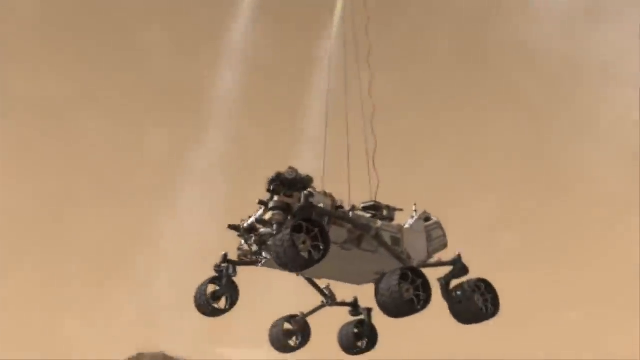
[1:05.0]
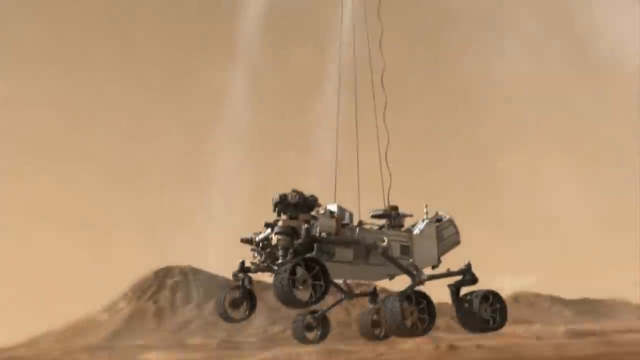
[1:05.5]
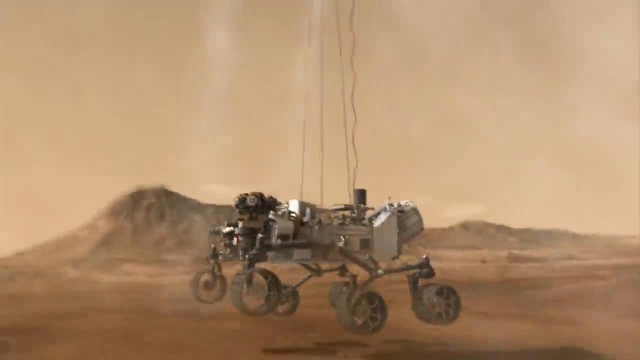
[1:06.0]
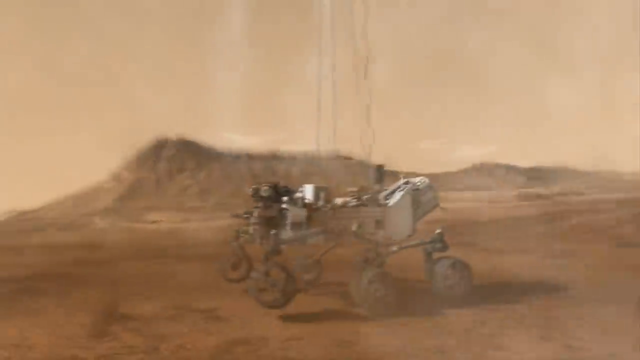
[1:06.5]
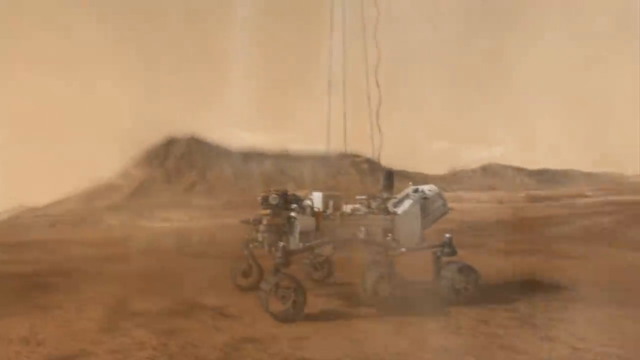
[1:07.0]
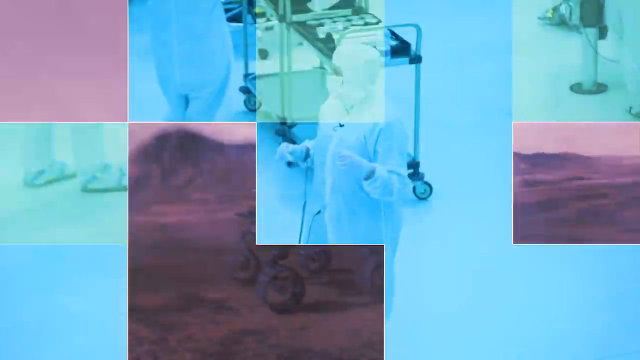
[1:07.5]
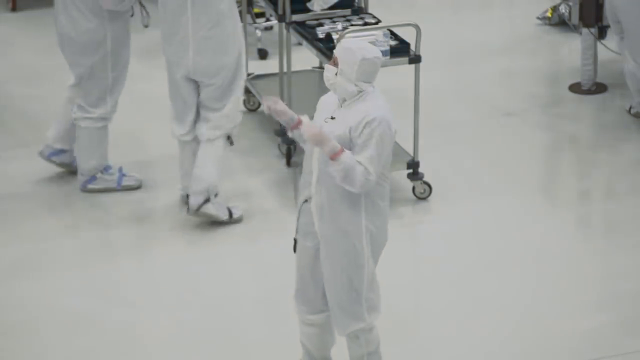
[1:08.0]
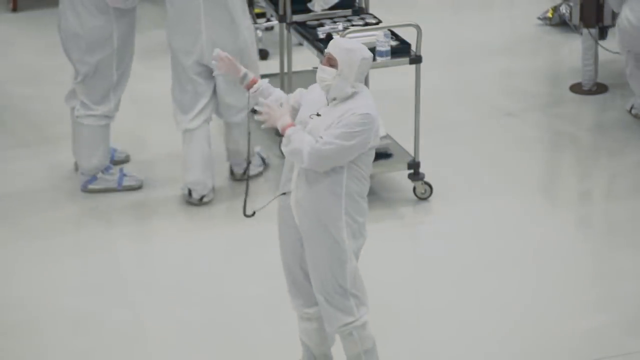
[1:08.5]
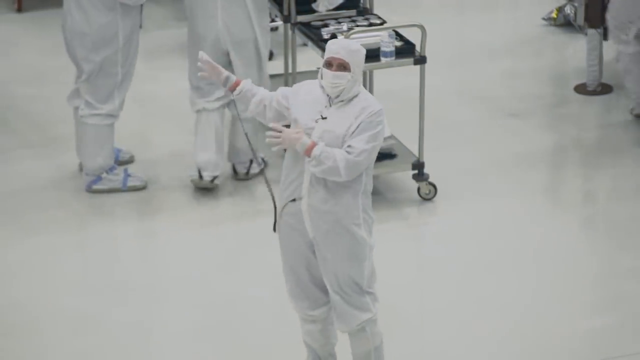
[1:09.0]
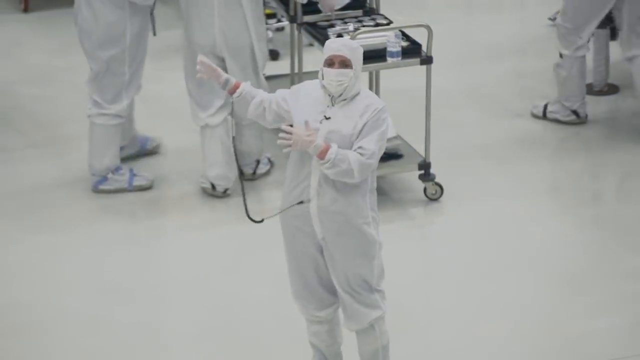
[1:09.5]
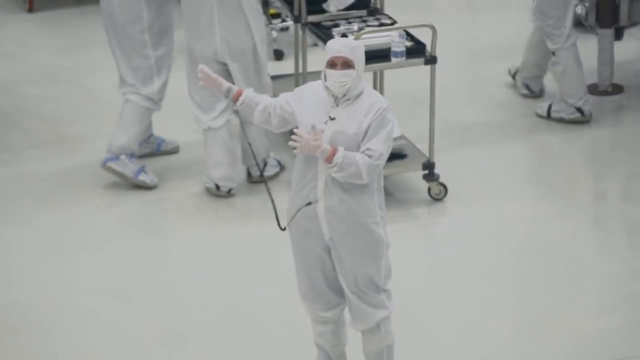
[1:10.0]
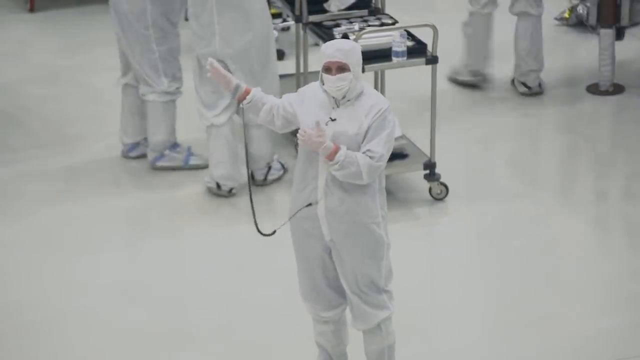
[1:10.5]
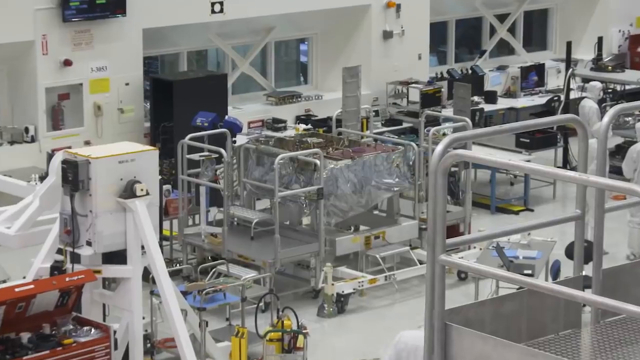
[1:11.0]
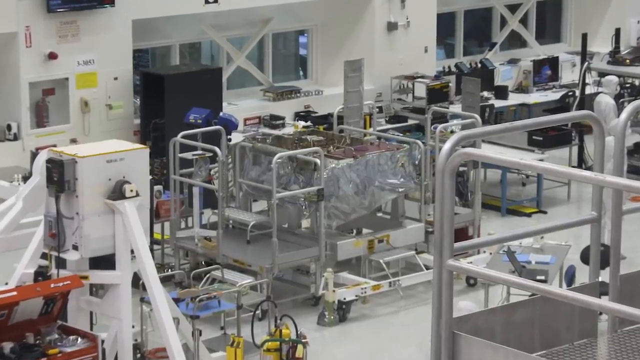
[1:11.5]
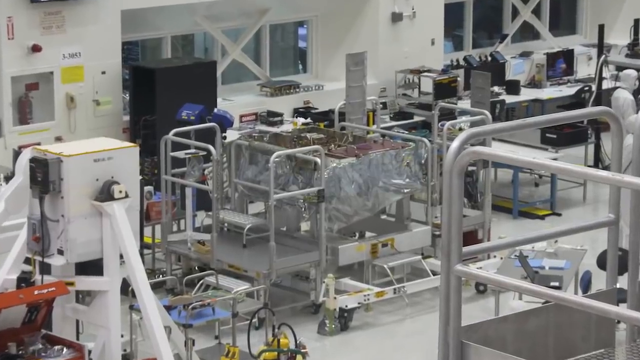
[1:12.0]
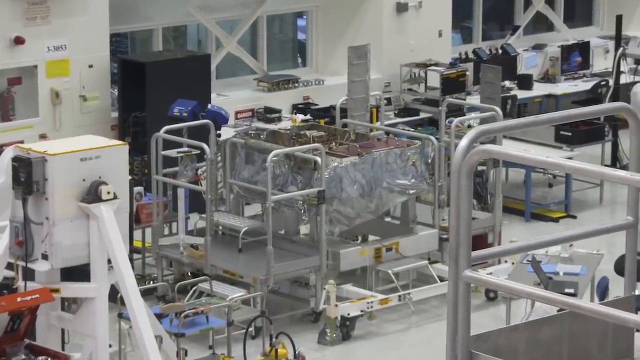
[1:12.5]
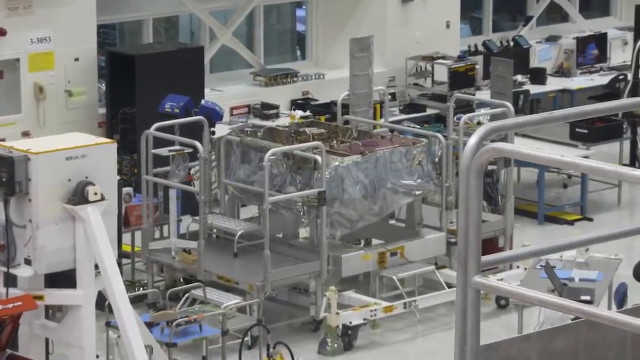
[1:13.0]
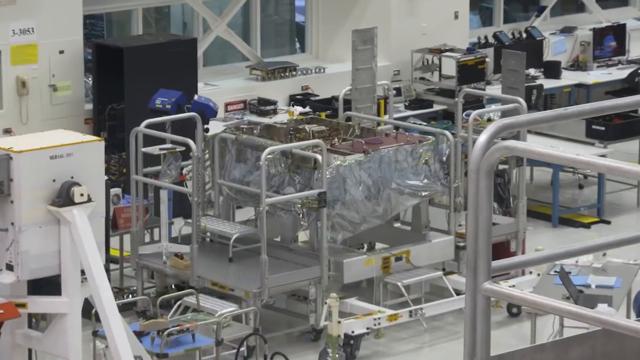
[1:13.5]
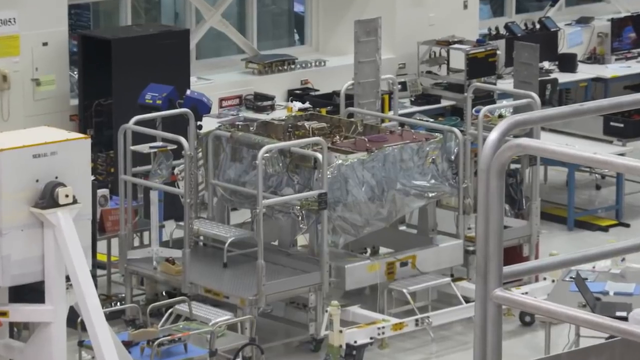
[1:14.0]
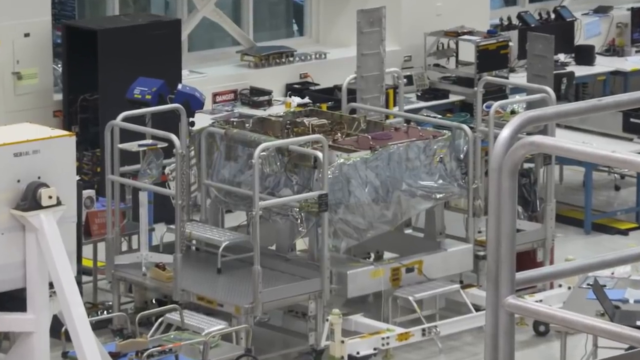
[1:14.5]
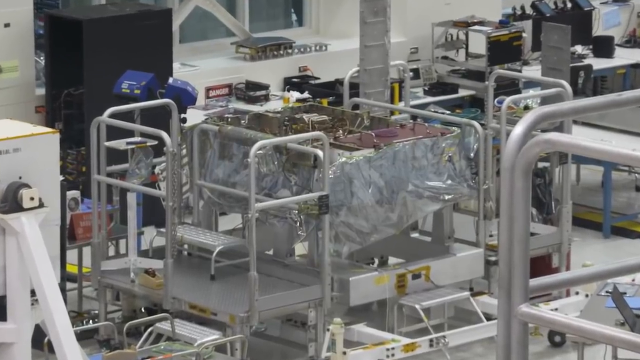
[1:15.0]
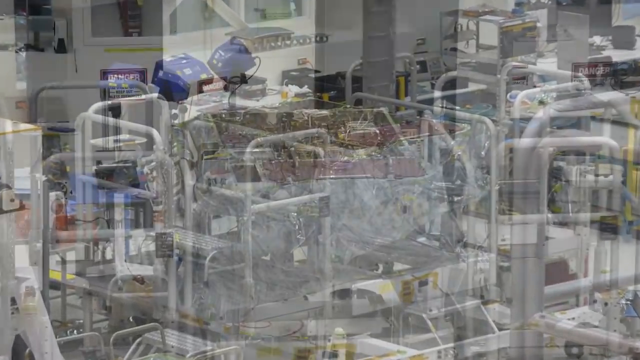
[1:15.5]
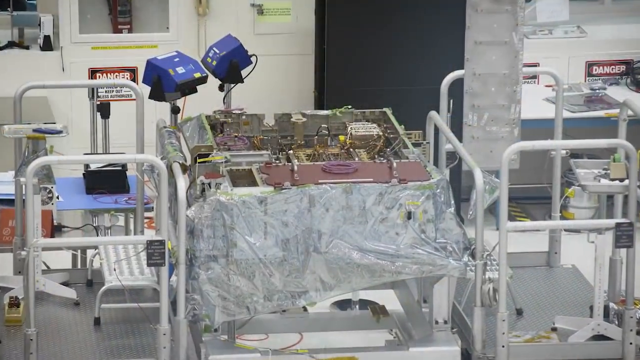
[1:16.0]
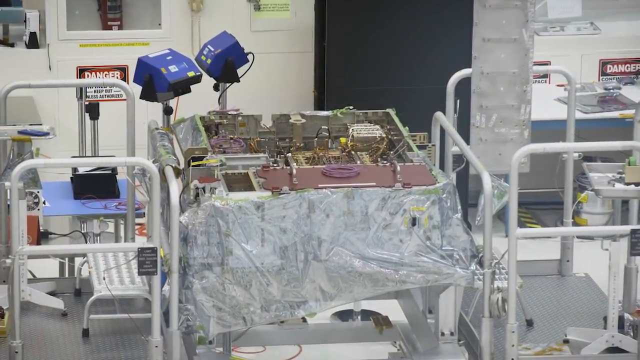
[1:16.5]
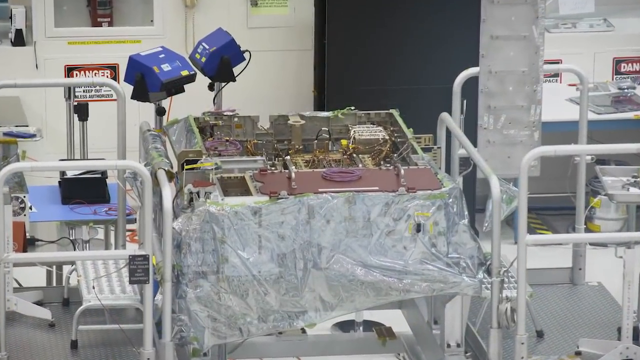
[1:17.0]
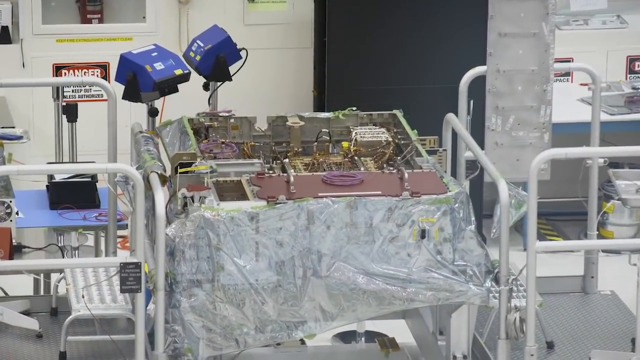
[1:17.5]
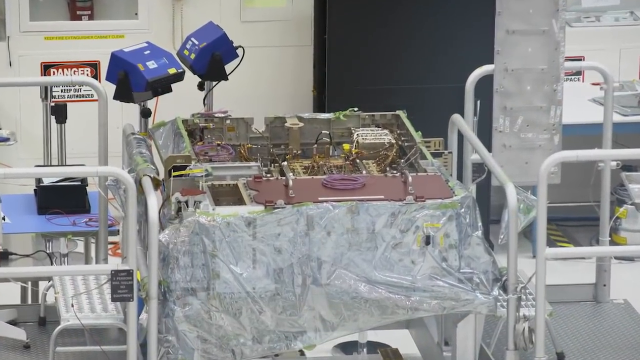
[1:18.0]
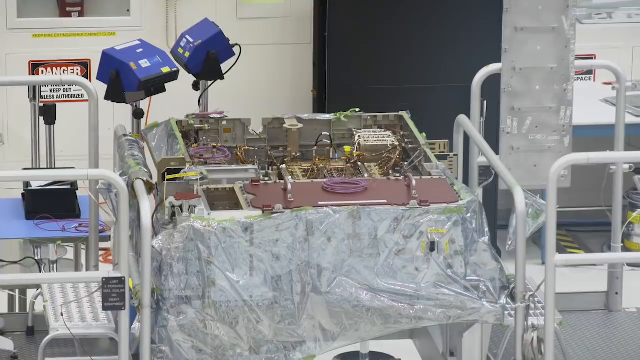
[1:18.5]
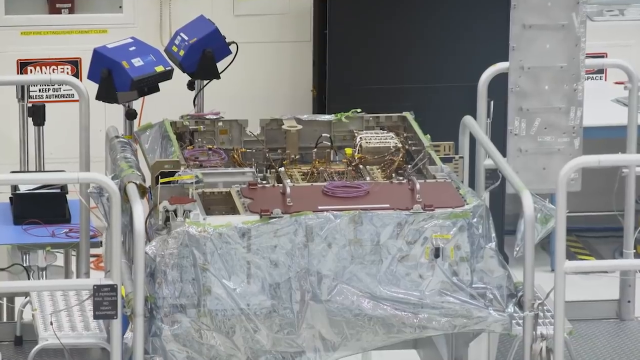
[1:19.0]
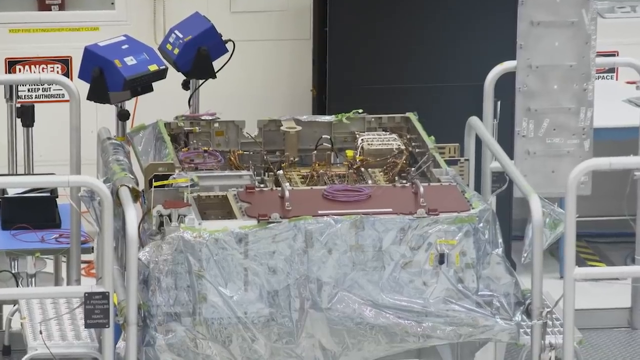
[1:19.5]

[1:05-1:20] The wheeled vehicle is placed on the surface of Mars: a little rocket above it, from which the vehicle is hoisted by wires, gently sets it down. The scene returns inside the NASA facility, where the woman talks to the camera and points to another area in which it looks like another type of vehicle is in the middle of being built. Its sides are all wrapped in aluminum-foil-type sheeting, and its inside is entirely filled with different types of electronics, electronic boxes and probably hydraulic-type boxes, apparently making it a very complex vehicle.